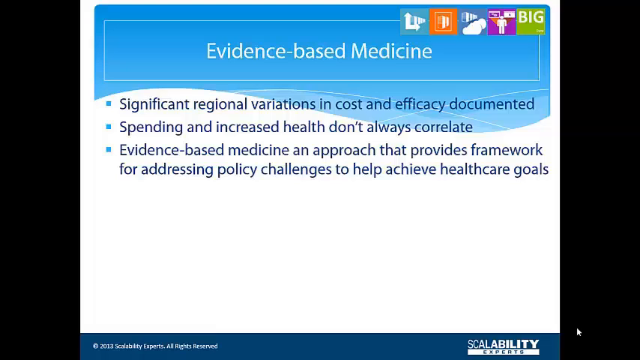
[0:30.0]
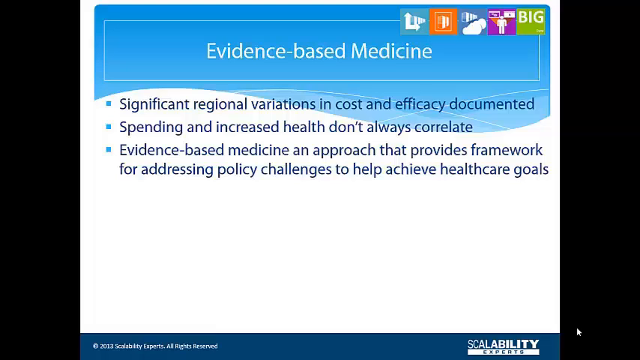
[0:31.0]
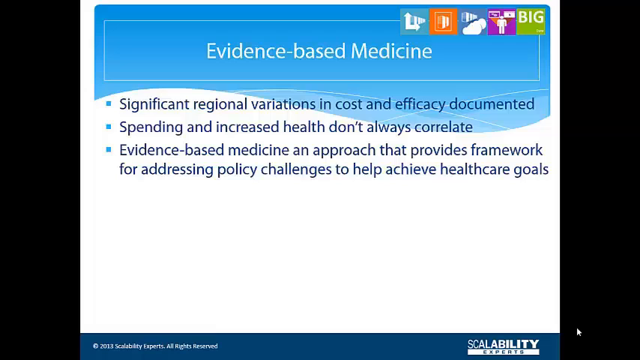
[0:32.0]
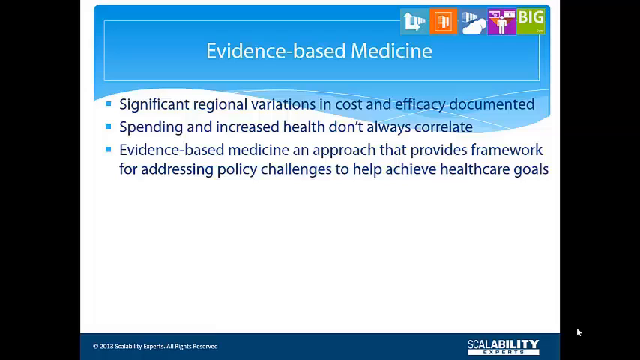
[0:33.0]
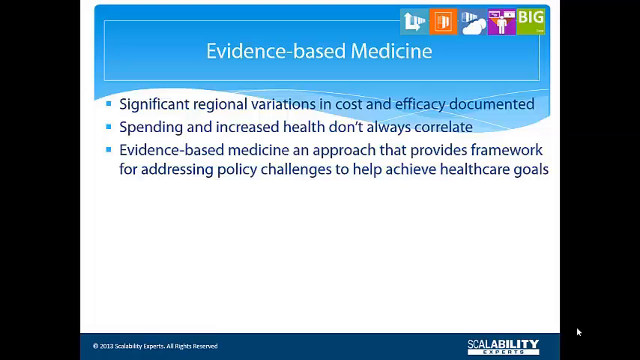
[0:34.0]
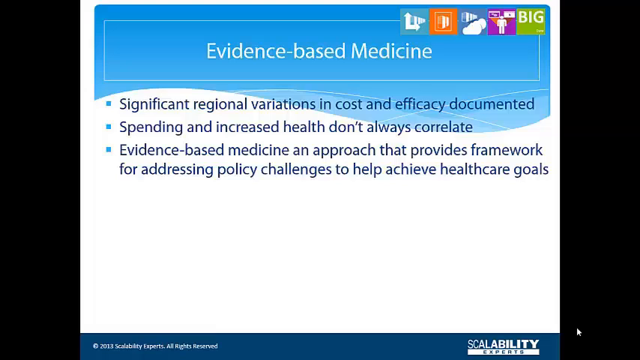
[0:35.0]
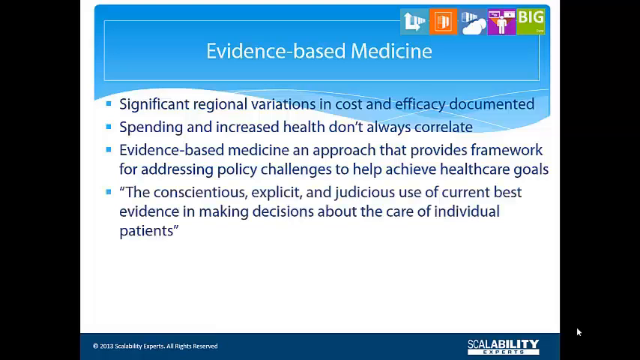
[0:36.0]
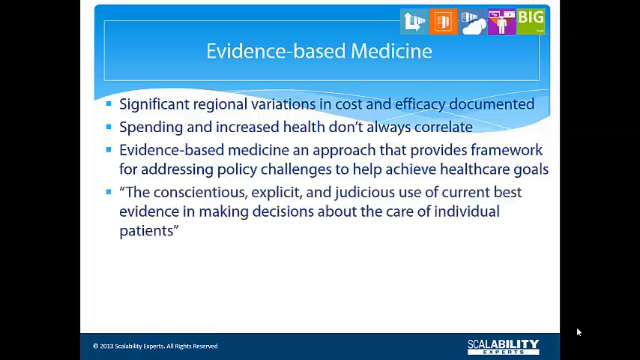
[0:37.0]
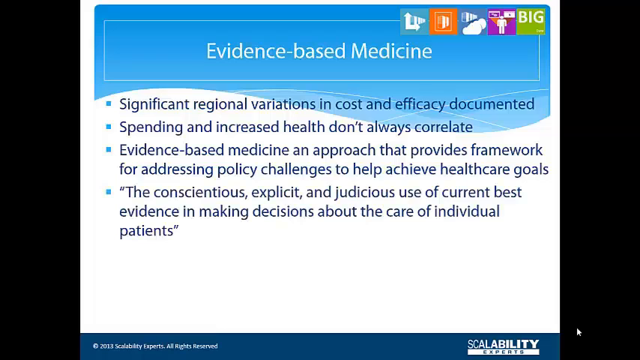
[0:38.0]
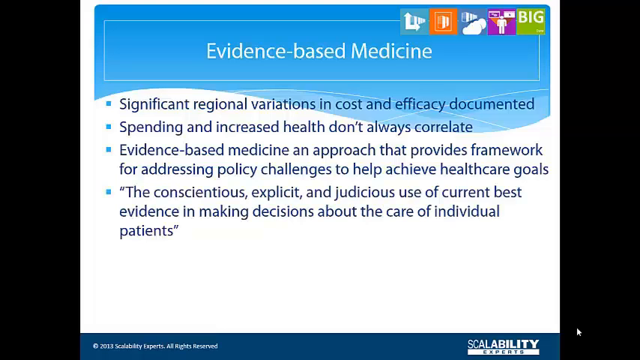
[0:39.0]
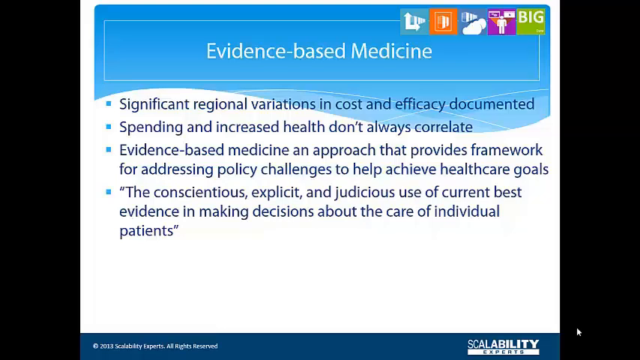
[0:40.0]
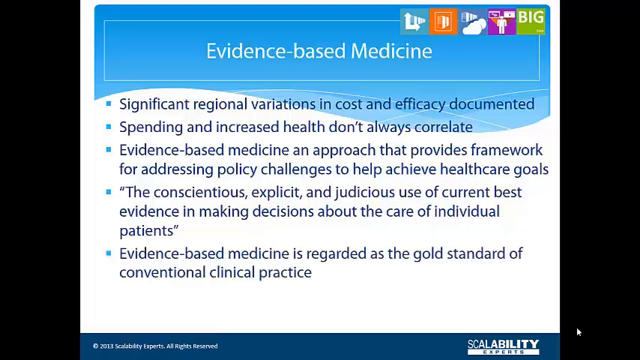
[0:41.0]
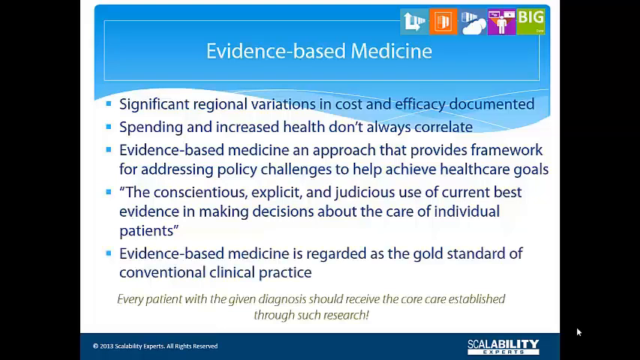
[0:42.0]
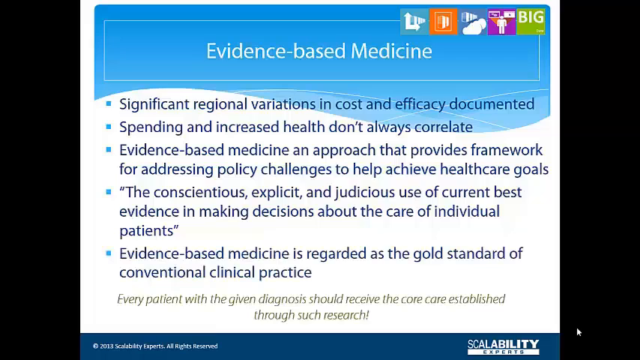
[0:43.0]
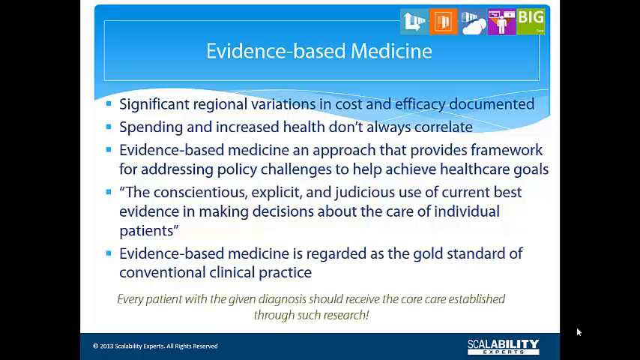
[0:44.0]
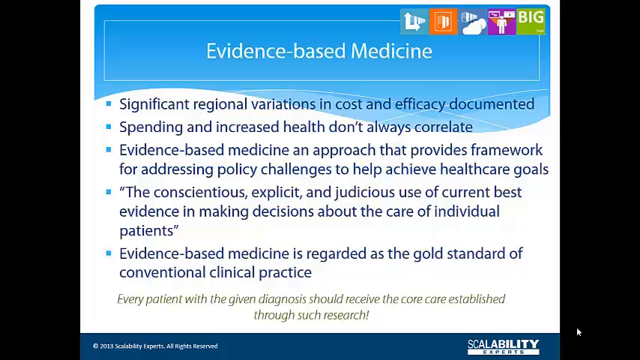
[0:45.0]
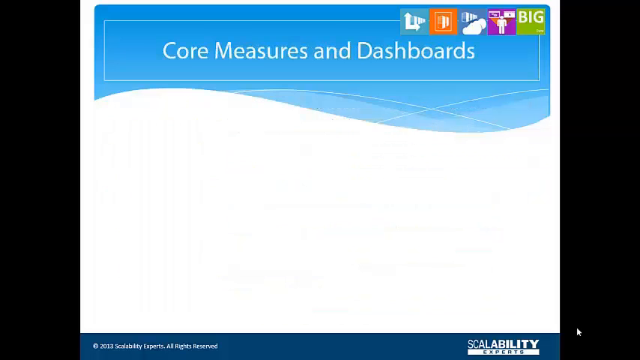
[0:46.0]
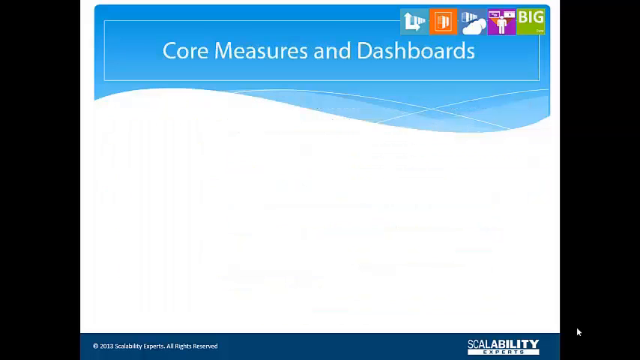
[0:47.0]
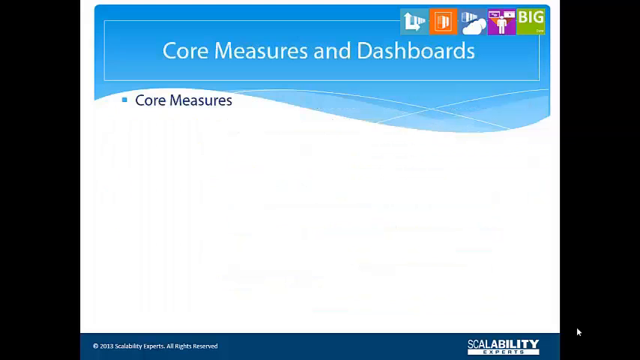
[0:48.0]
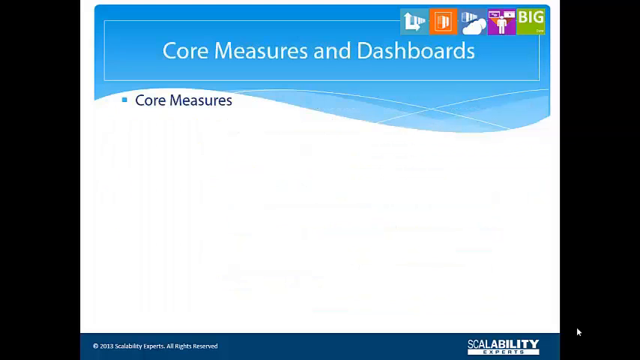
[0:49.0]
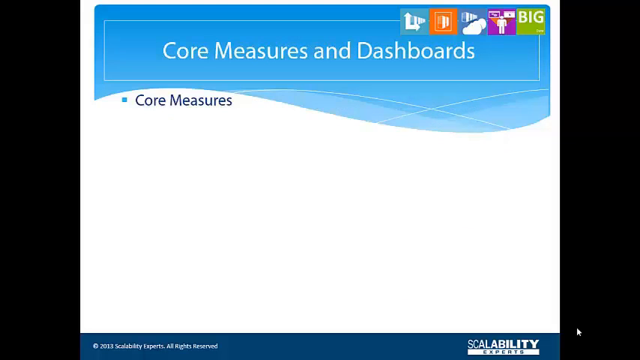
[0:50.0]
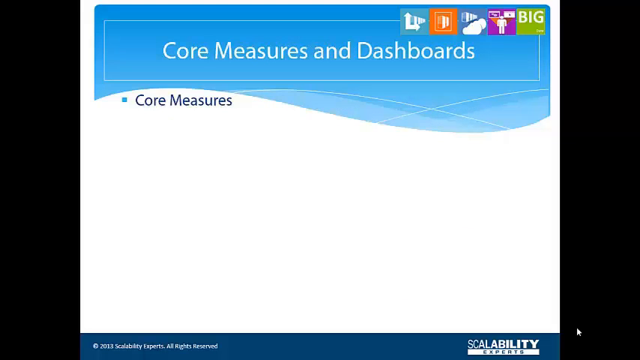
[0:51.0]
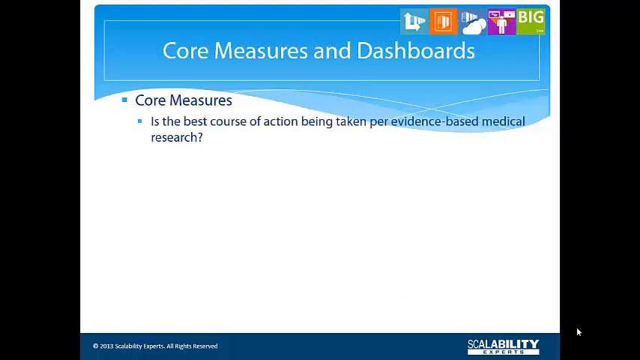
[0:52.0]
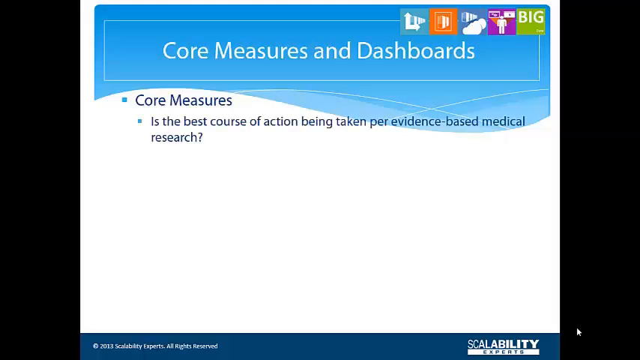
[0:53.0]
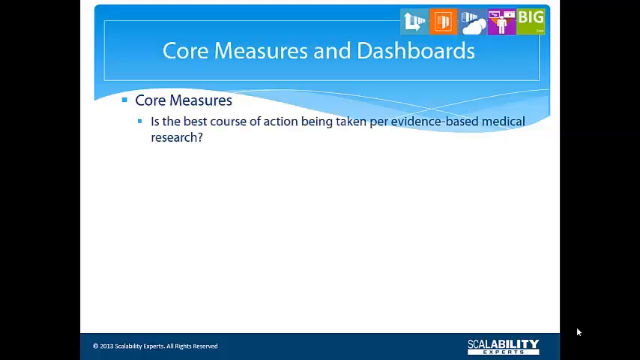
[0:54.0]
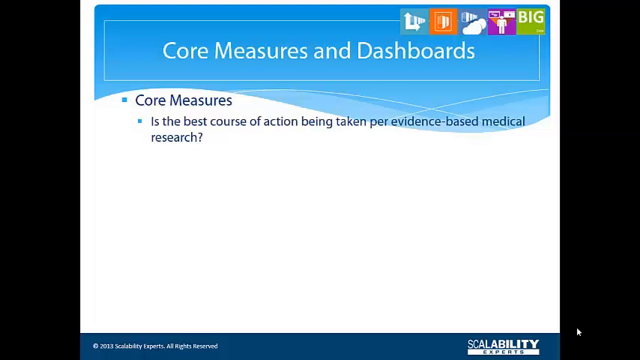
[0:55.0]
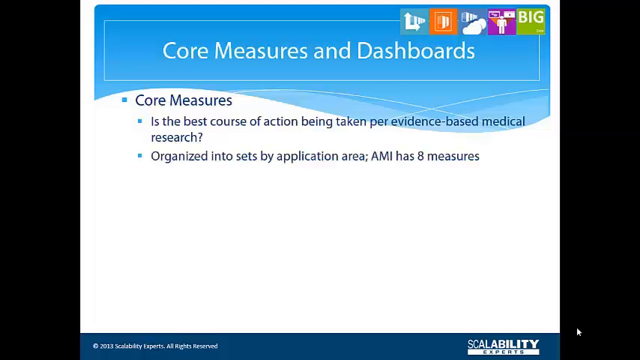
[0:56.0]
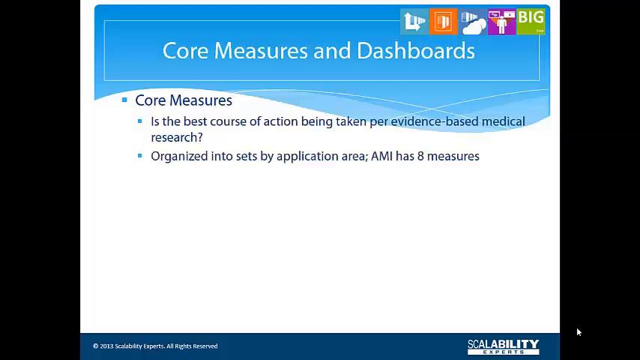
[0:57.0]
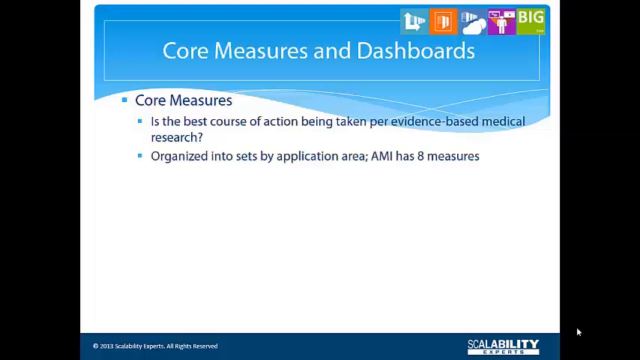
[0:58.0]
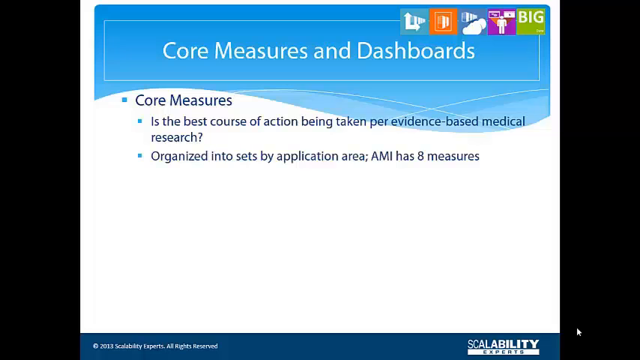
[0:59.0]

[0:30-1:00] Smaller versions of the five boxes appear in the upper right-hand corner of a new slide. Two black towers, each taking up about 10% of the screen, flank the slide. The title "Evidence-based medicine" is in a primarily blue dialog box that changes from a rectangle into wavy content that dips down into the printed area beneath it. The rest of the printed area has a white background, and its black bullet points read: "Significant regional variations in cost and efficacy documented", "Spending and increased health don't always correlate", and "Evidence-based medicine, an approach that provides framework for addressing policy challenges to help achieve health care goals".